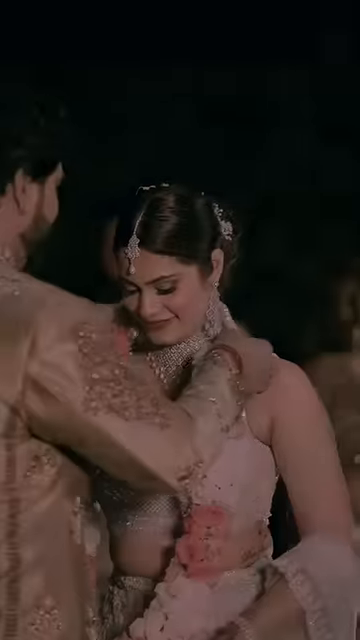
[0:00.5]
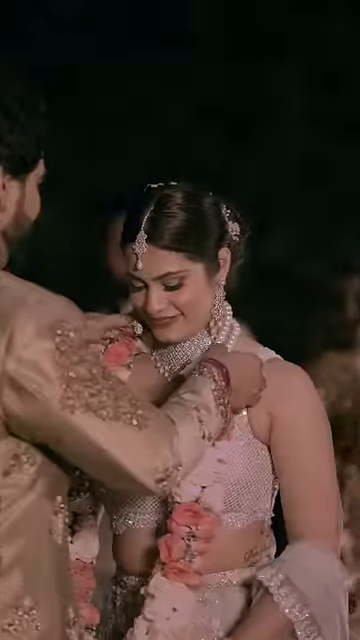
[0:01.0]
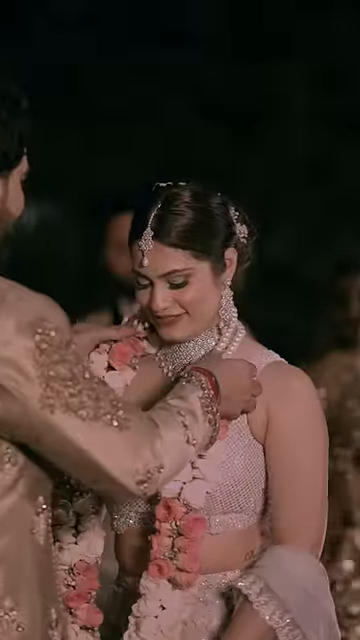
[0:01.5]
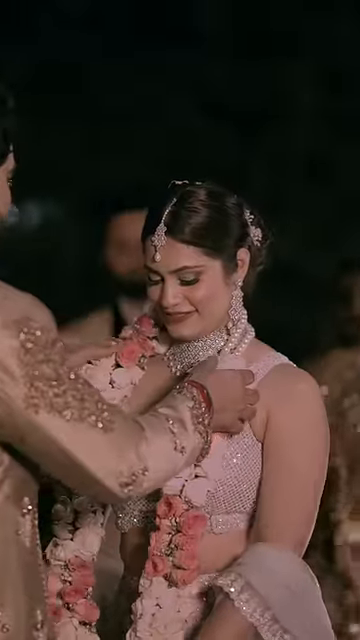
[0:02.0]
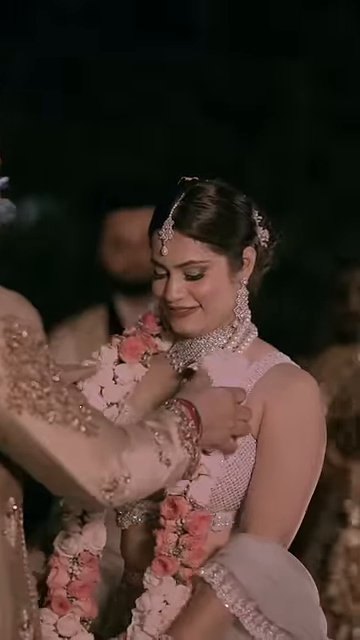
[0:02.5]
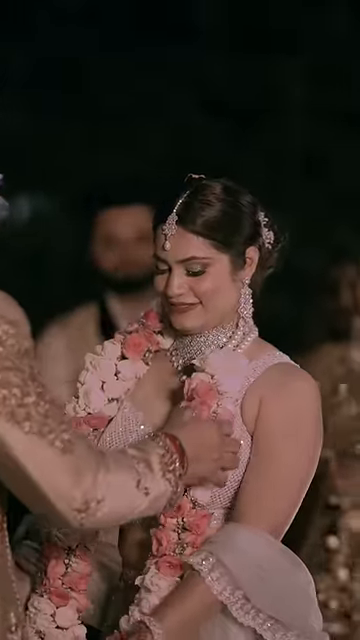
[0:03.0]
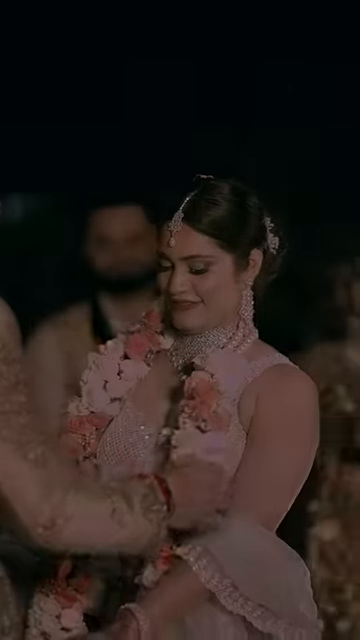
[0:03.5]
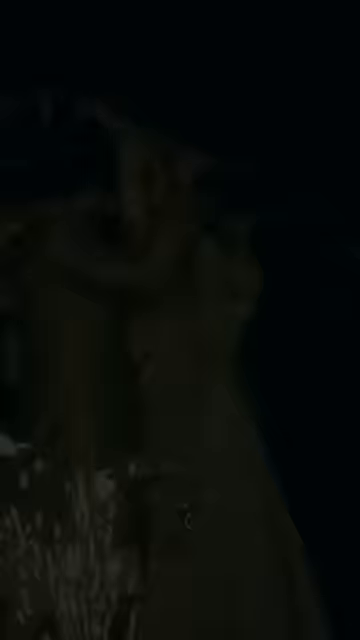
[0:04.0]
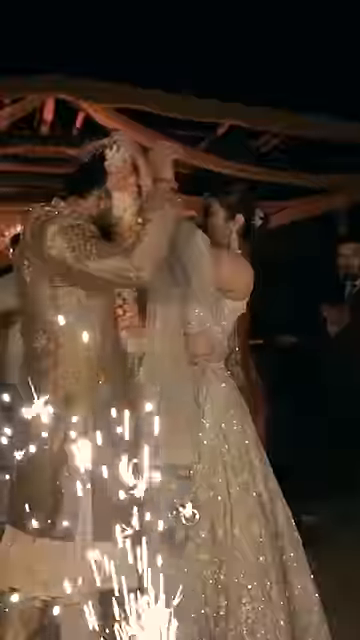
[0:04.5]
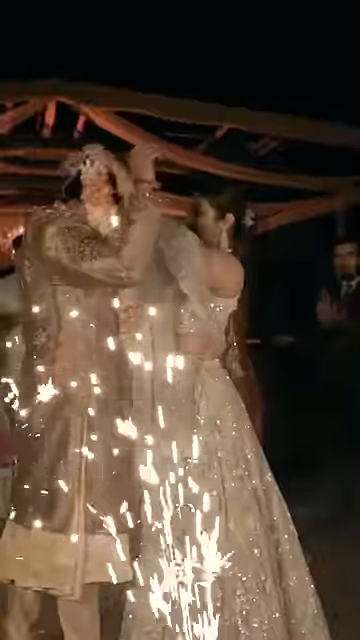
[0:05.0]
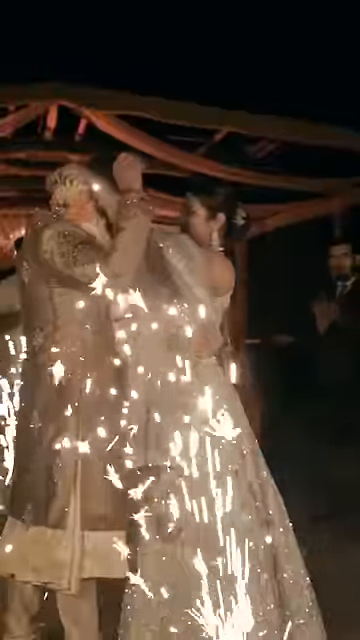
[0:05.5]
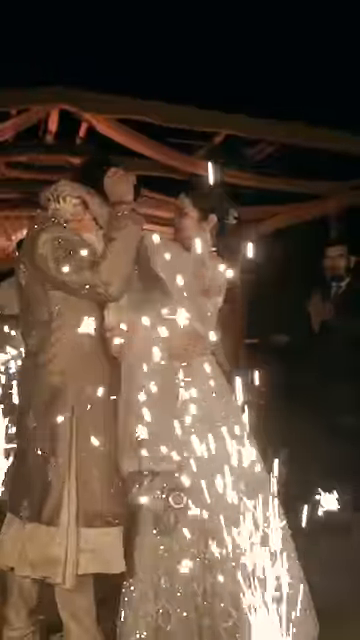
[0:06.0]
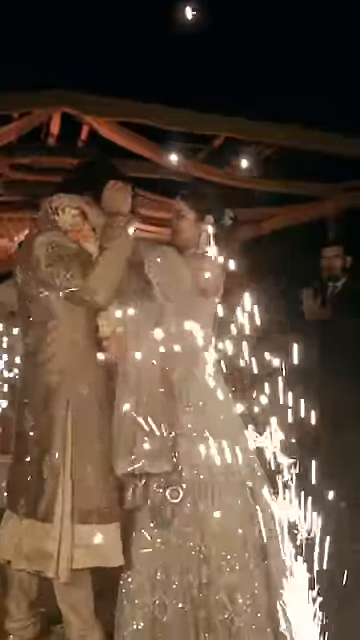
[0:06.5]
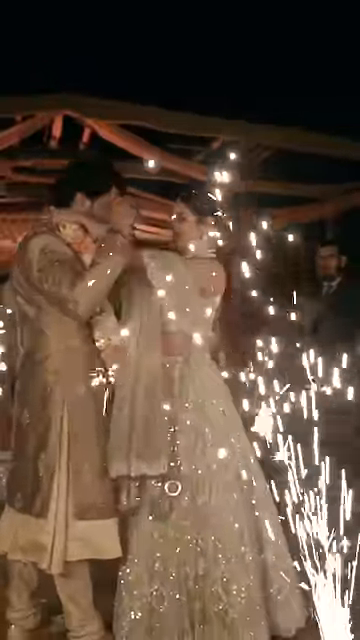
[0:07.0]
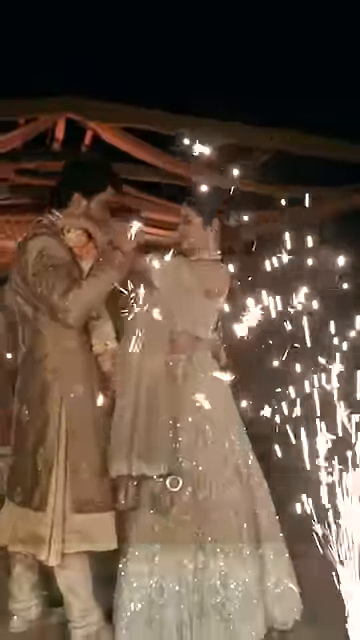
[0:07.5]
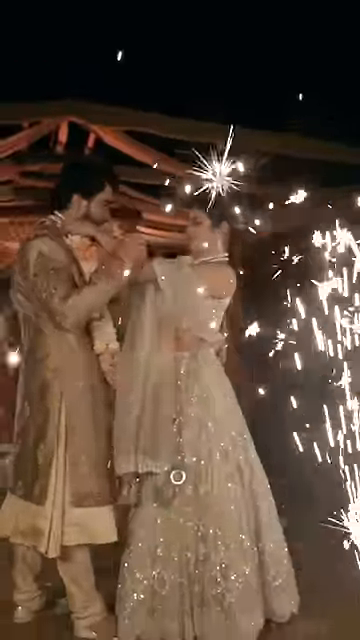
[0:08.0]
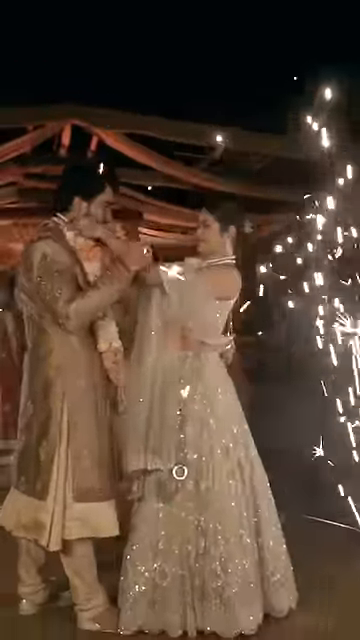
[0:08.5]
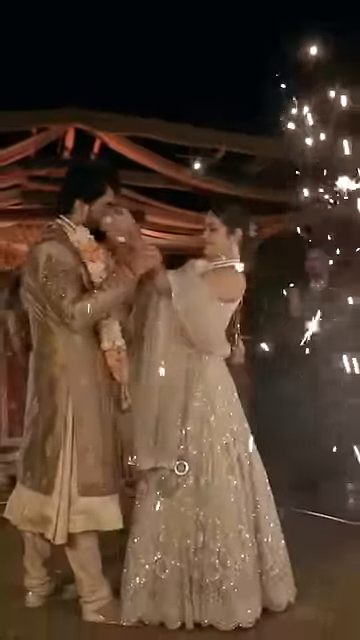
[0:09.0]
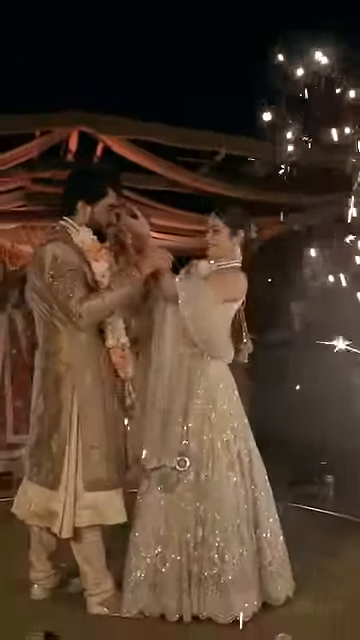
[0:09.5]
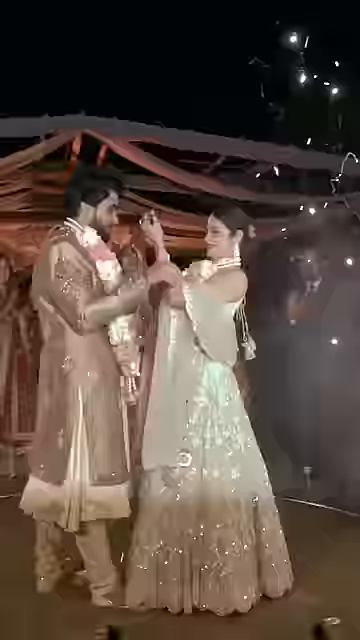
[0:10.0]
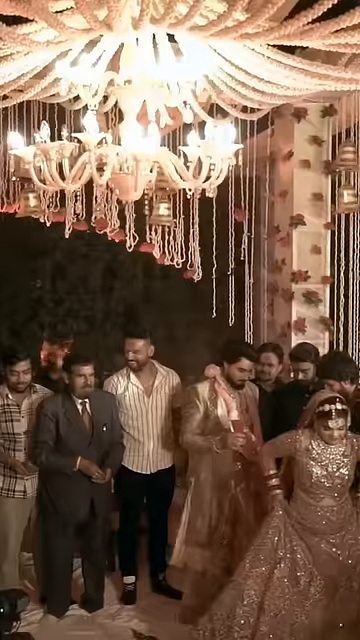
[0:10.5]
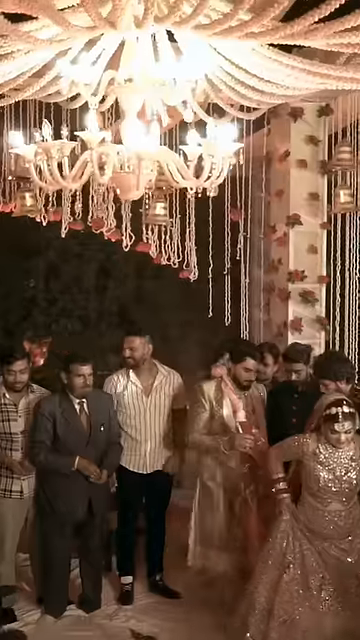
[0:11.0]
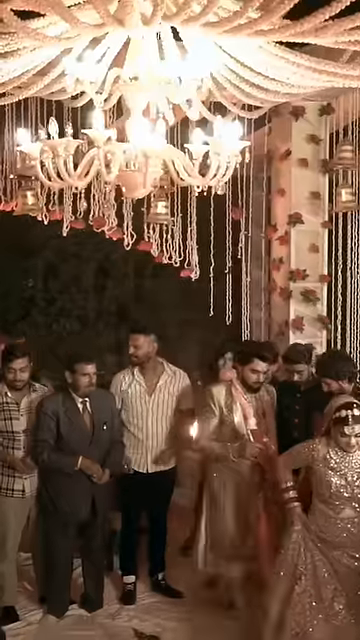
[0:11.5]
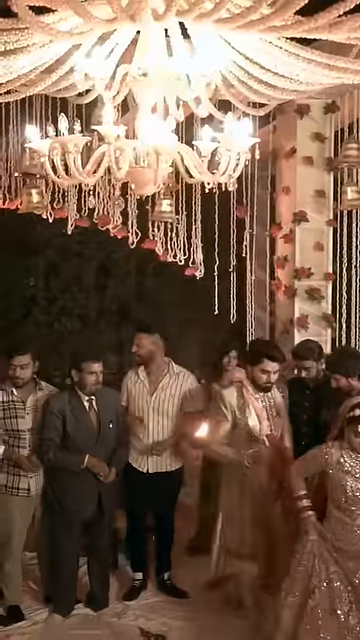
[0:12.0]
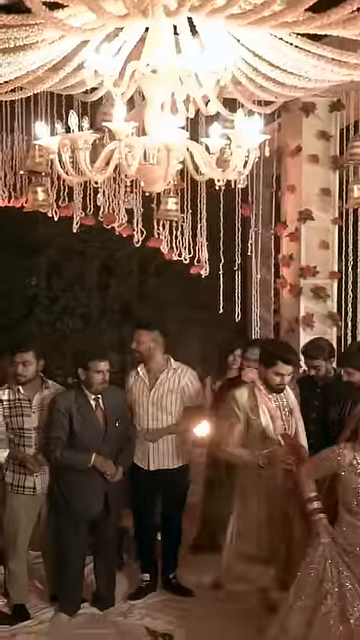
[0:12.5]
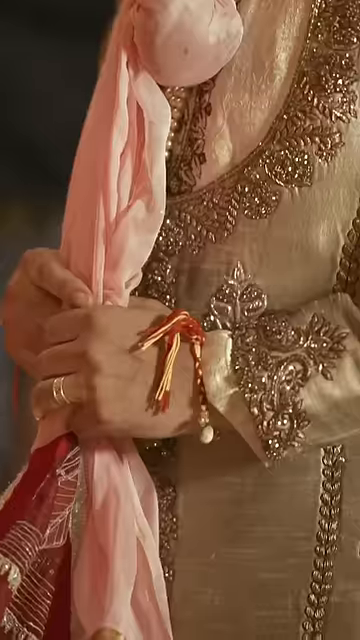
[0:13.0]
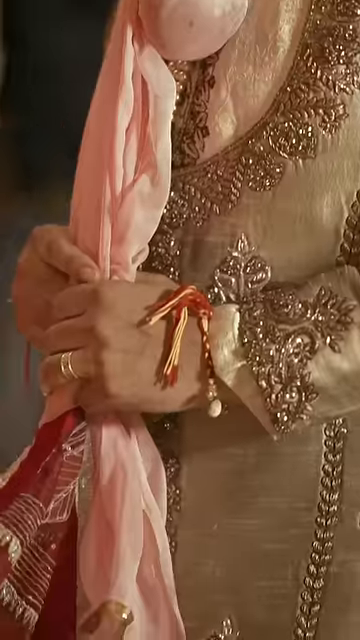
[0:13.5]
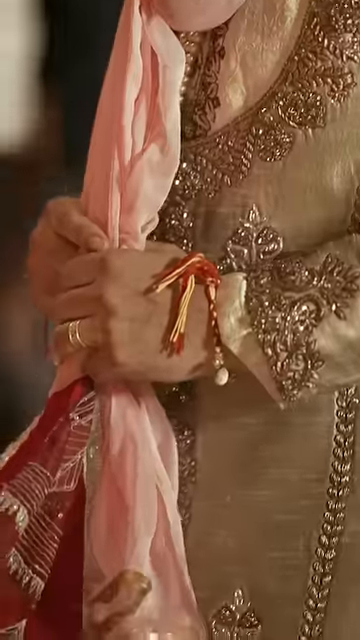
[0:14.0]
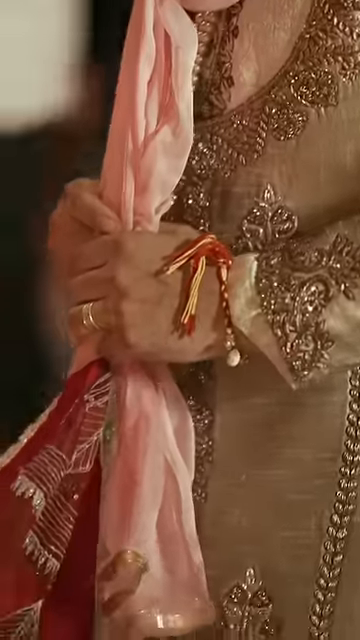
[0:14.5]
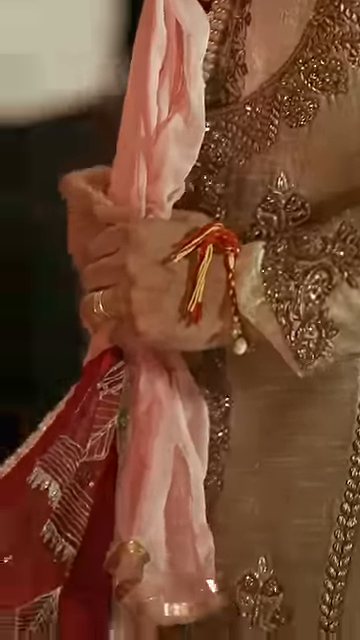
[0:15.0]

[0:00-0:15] A wedding is taking place, apparently between a couple who live in India, though it is not clear whether the event is in India. The woman wears a very elegant dress with a shawl wrapped around her shoulders, and everything is beaded; she has beads around her neck like a necklace. The man wears a very long, extravagant beige coat rimmed with white that looks very satiny. He puts a lei of flowers around her, and then she reaches up with a lei of pink and dark pink flowers, putting it around her neck. The camera zooms out for a moment to show some of the wedding guests coming to the event, who are also dressed up. Sparklers and fireworks are visible in the front area and in the background. When the guests are shown, a chandelier is visible up high, very well lit.